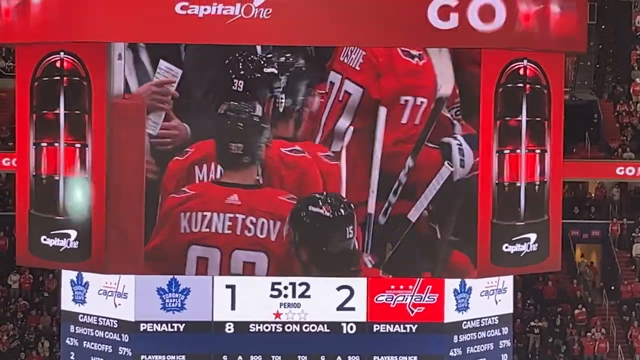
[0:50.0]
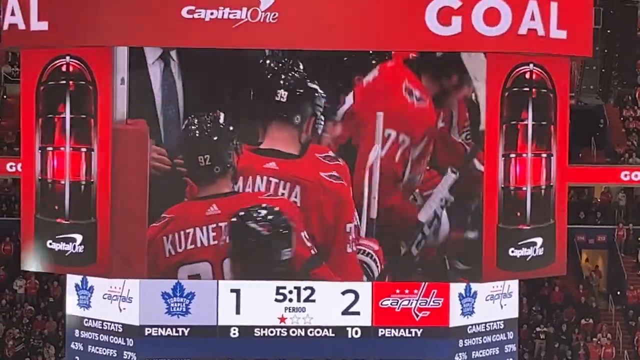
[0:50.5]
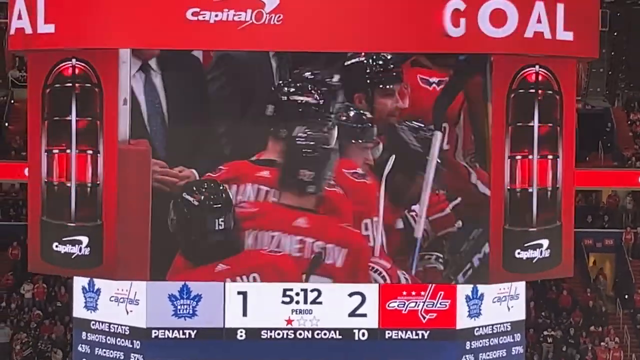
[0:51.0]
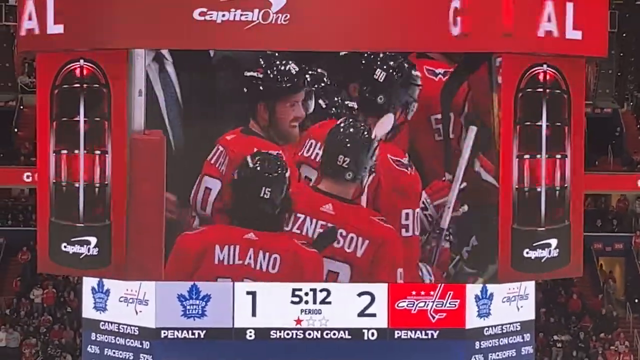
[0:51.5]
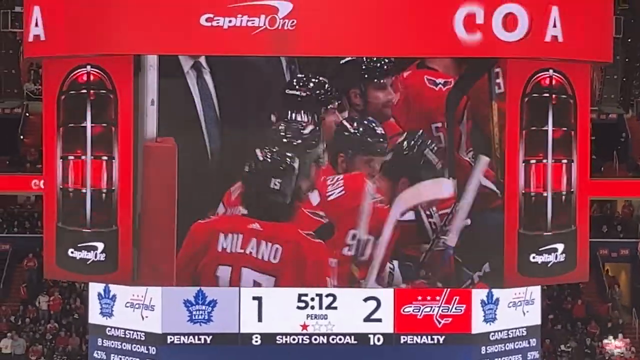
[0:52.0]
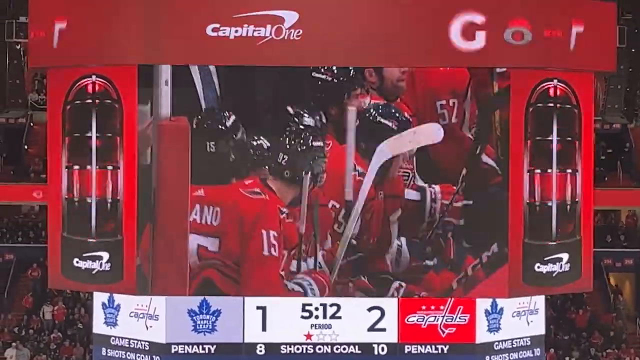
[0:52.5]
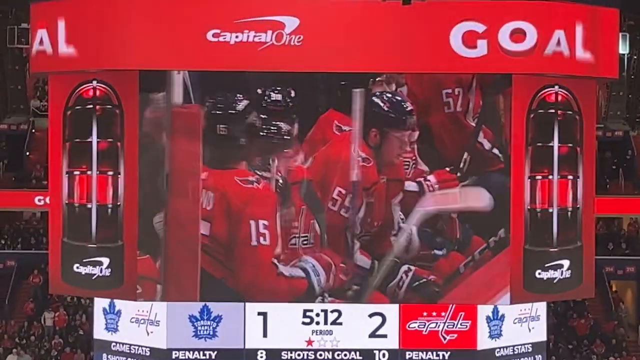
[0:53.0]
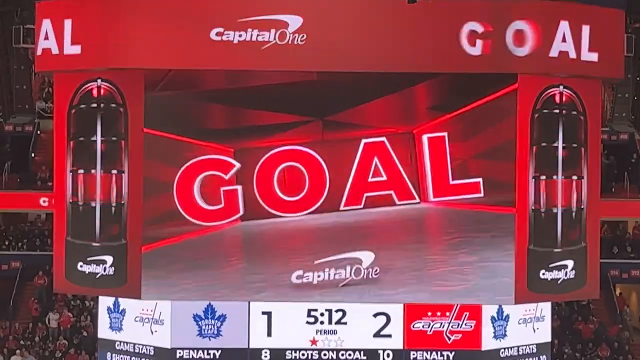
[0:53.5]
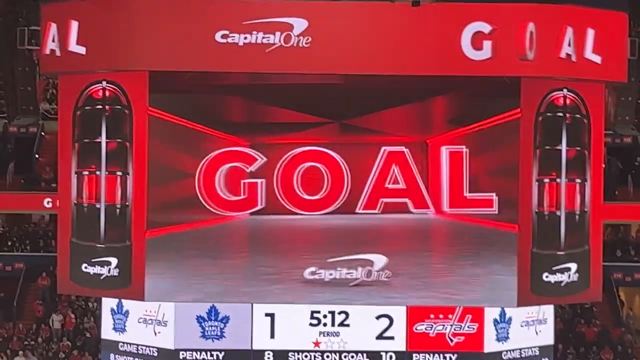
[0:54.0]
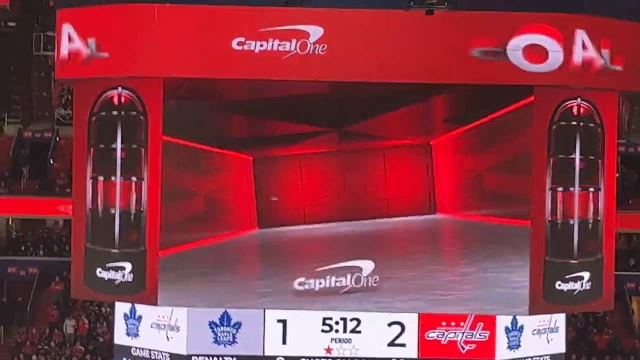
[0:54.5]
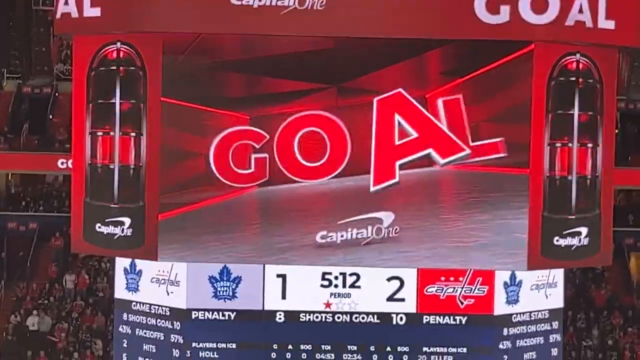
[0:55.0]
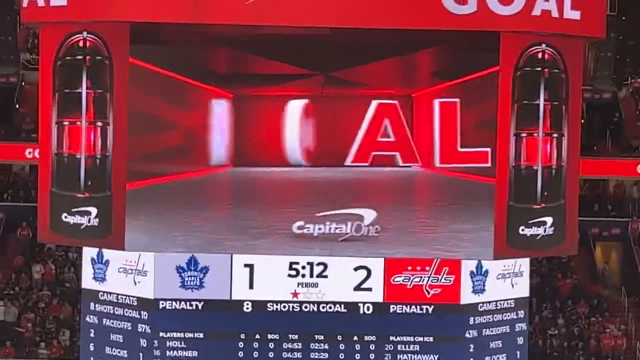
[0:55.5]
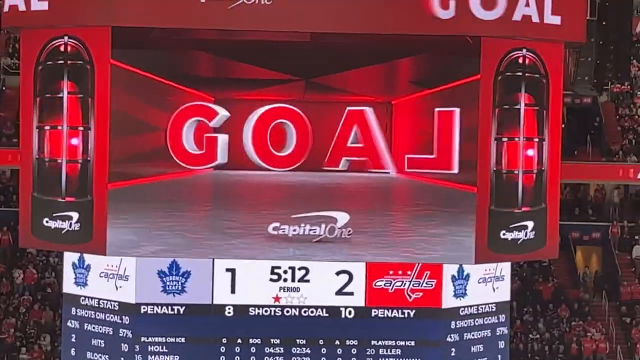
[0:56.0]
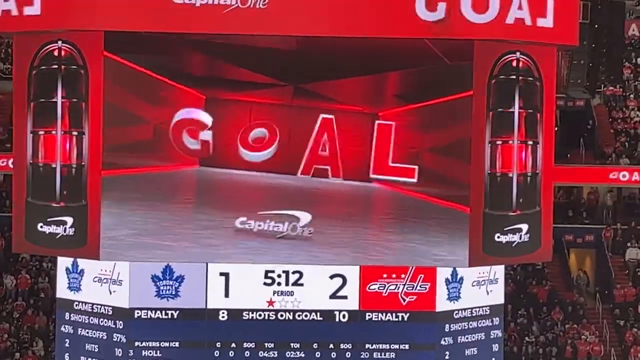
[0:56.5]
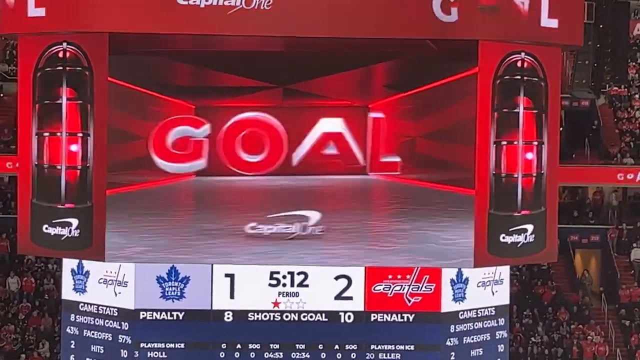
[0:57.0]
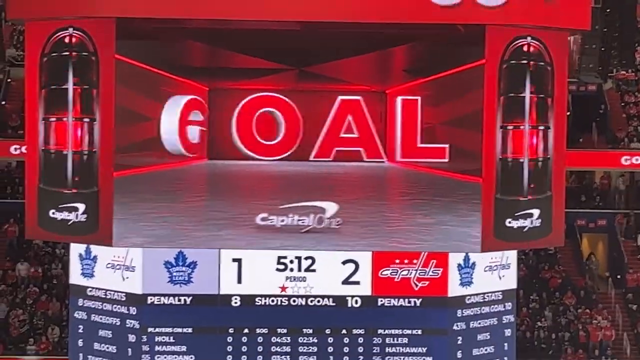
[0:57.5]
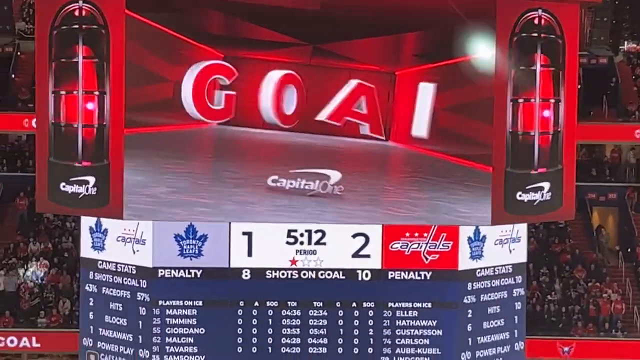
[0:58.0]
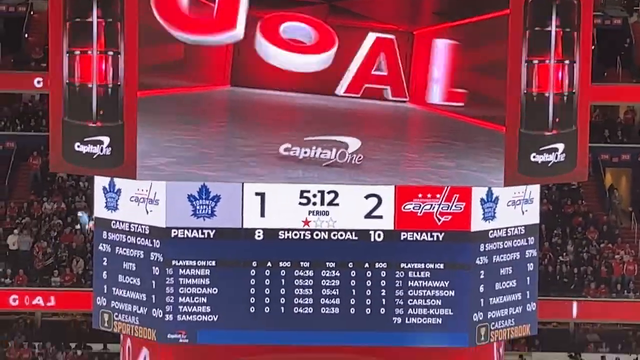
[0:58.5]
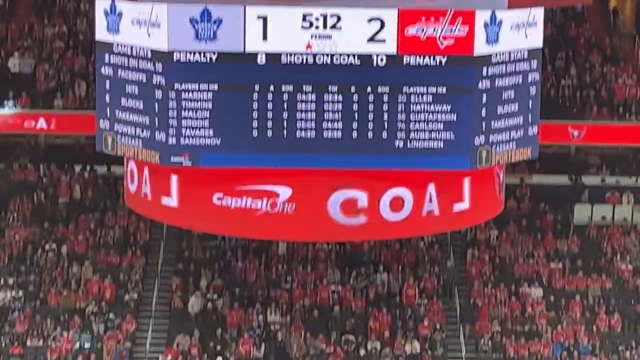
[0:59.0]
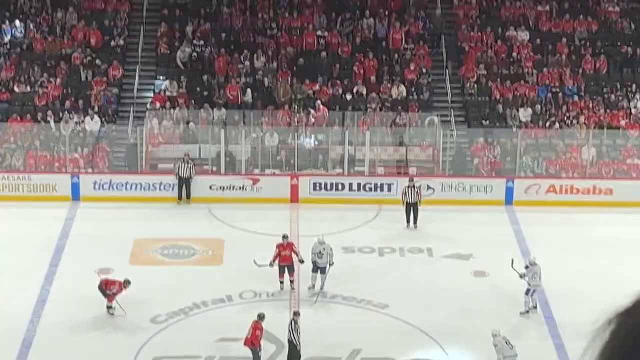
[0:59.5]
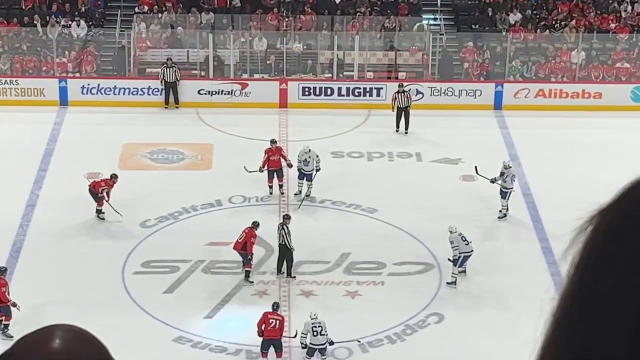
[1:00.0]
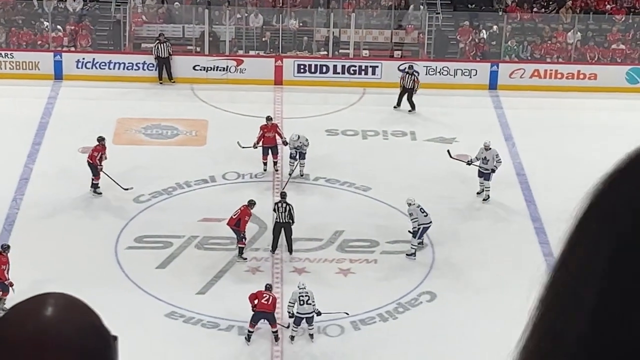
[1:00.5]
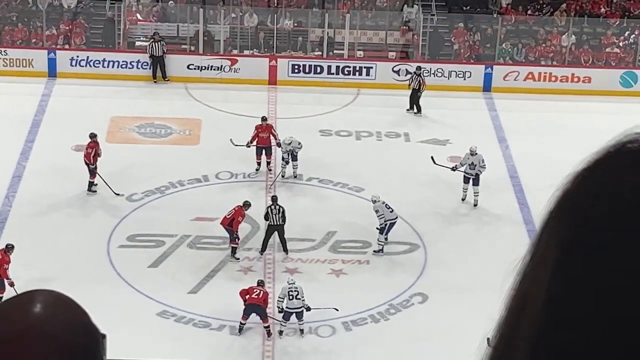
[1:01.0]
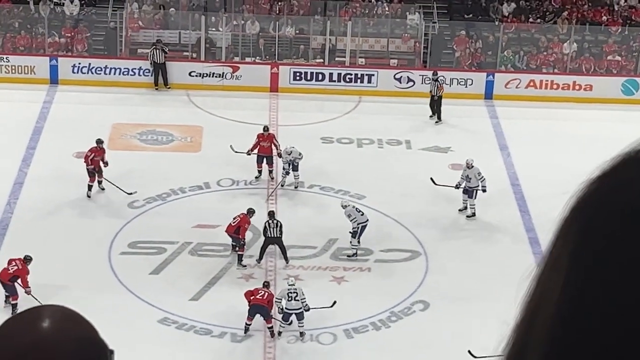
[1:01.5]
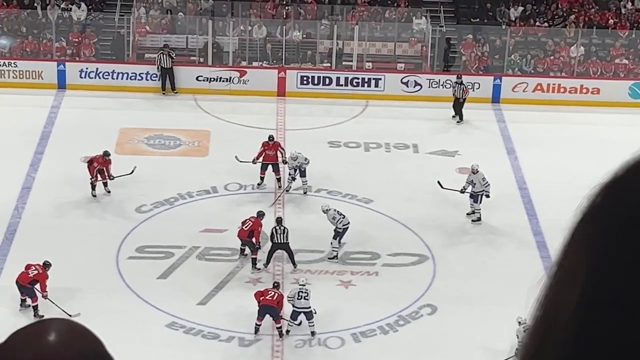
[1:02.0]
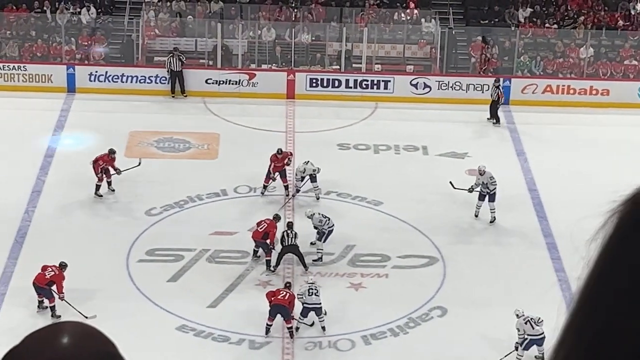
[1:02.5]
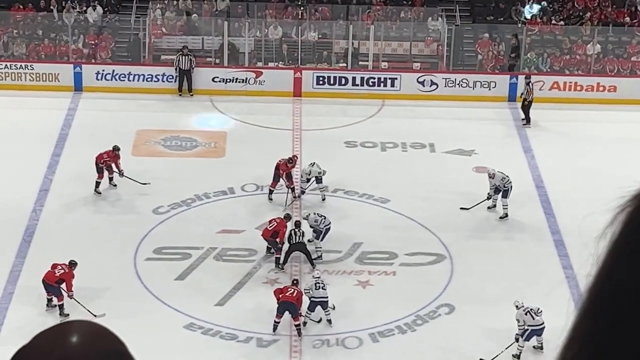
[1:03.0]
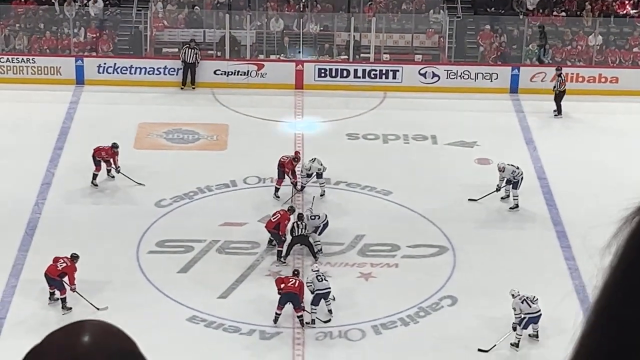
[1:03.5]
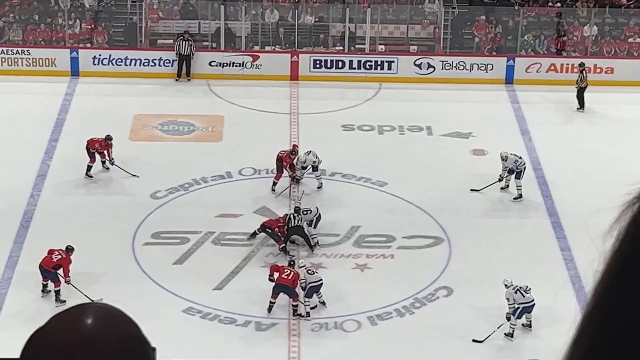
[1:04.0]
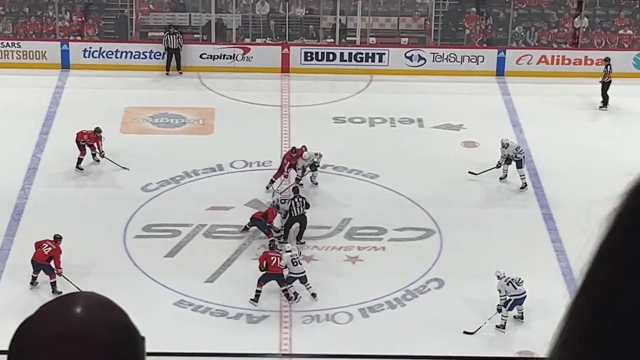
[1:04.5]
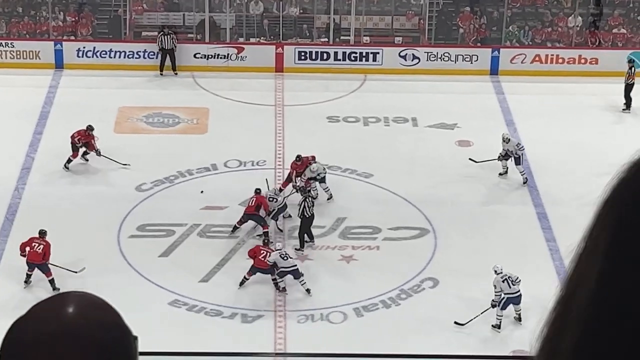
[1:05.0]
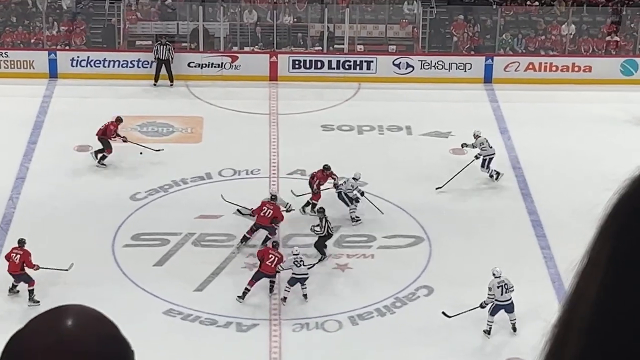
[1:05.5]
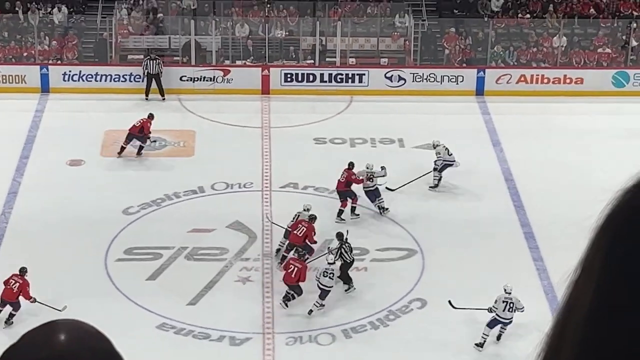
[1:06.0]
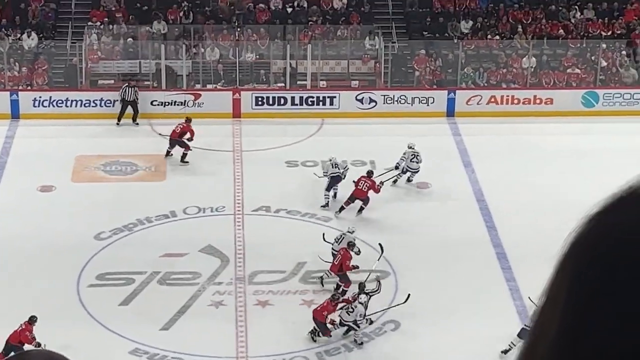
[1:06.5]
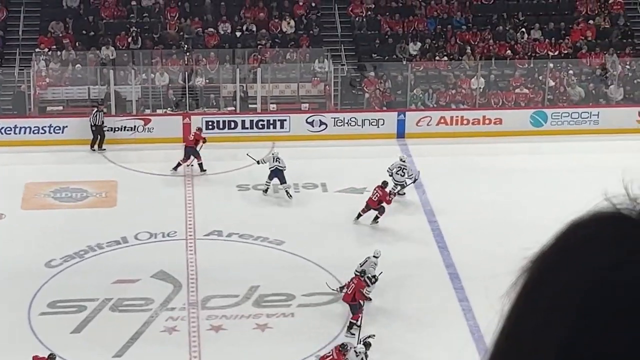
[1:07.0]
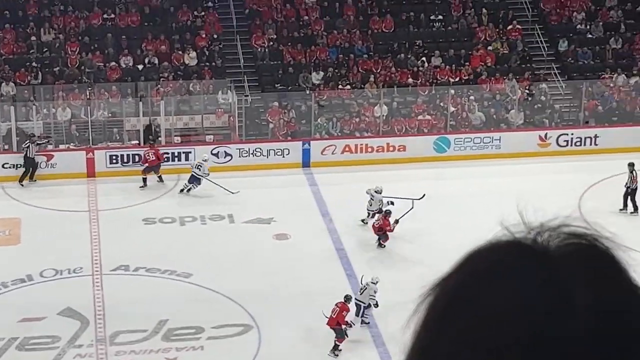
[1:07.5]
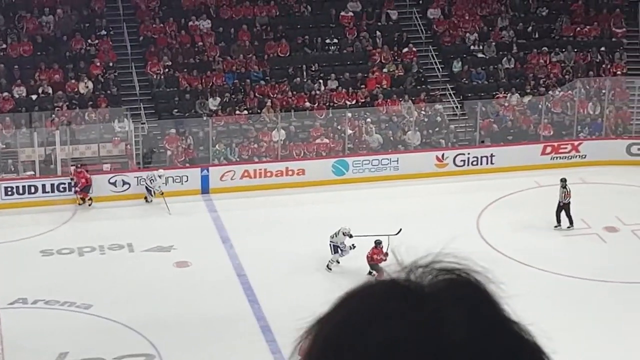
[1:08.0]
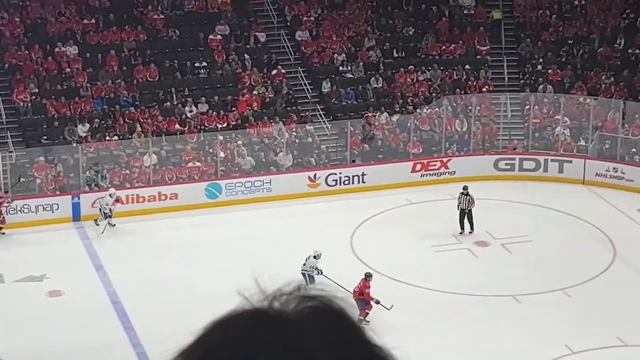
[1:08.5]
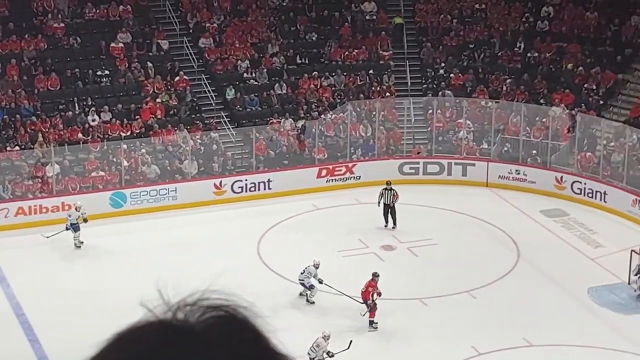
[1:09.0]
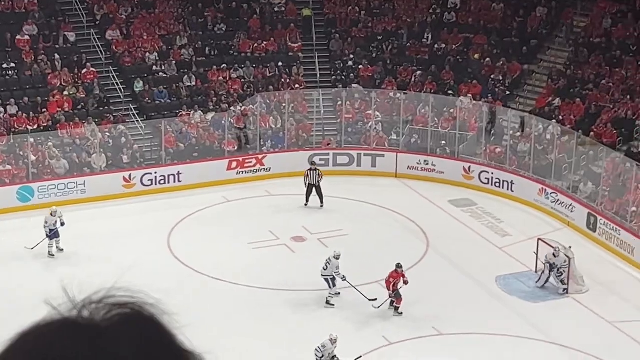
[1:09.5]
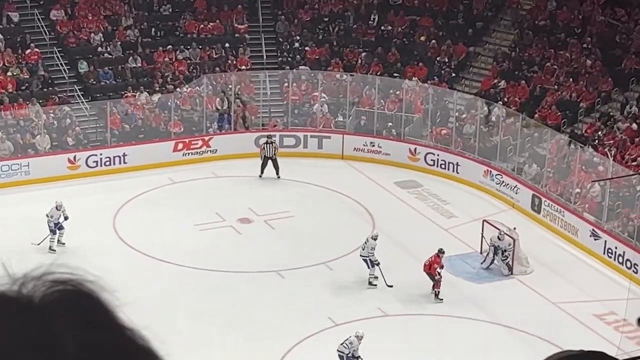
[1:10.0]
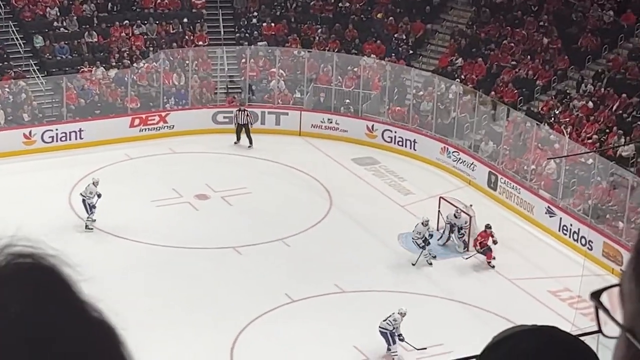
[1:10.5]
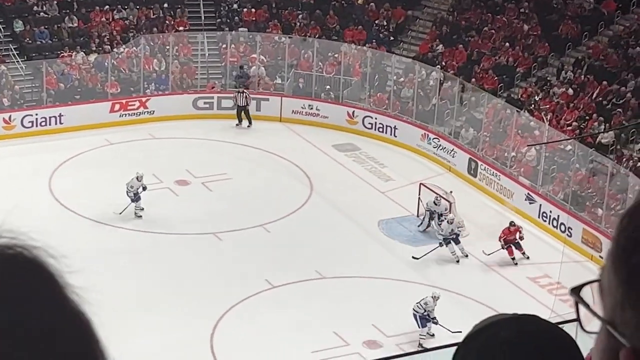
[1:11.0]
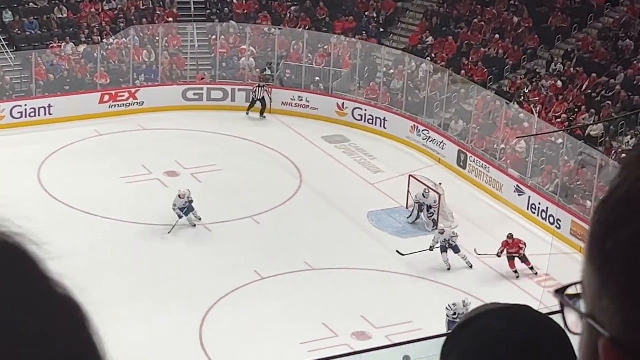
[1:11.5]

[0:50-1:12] The Capital One Jumbotron says "goal, goal" with flashing red lights, and the crowd goes wild. Play then resumes as the ref drops the puck for a faceoff, and the puck is moved around between the white team and the red team. The crowd keeps cheering about the goal as the screen shows "one to two" along with a time, against the Capitals. The red team is the Capitals. The players are grown men, including Kusanoff, wearing black helmets.